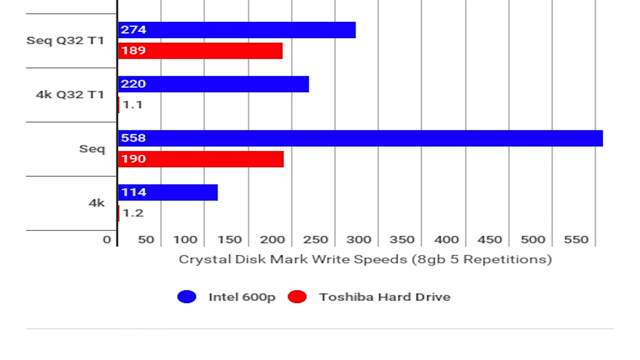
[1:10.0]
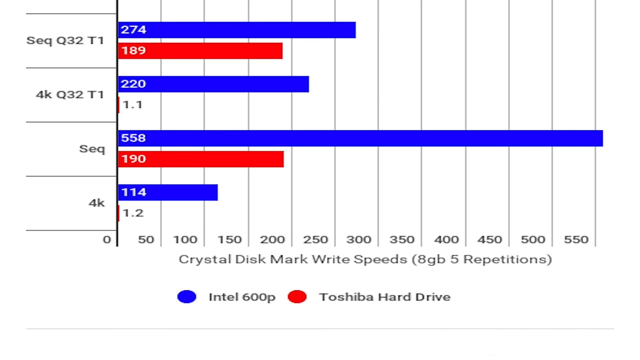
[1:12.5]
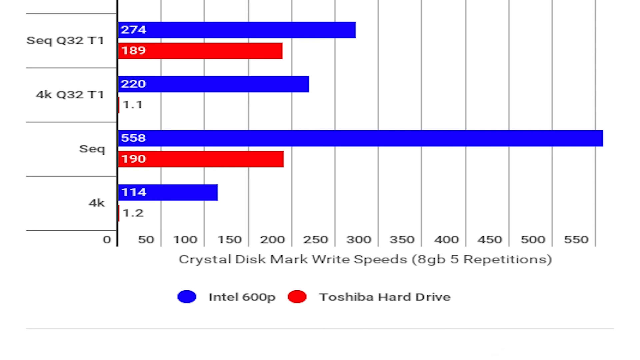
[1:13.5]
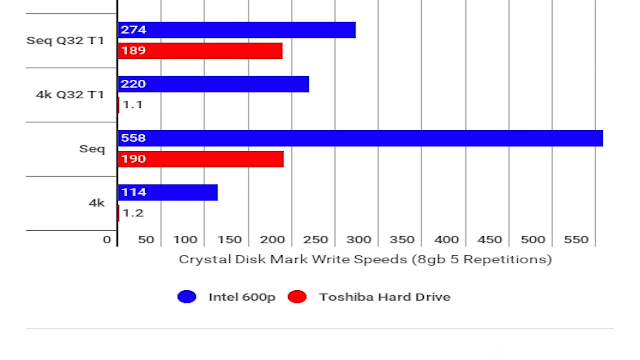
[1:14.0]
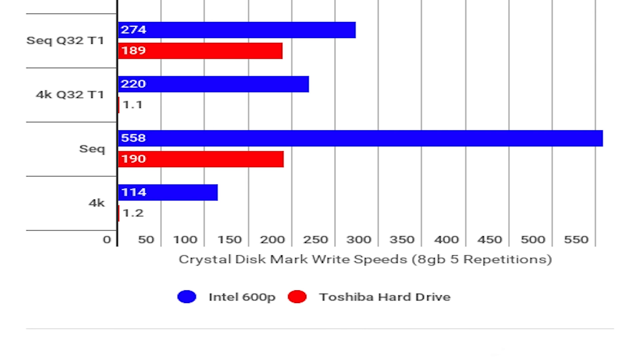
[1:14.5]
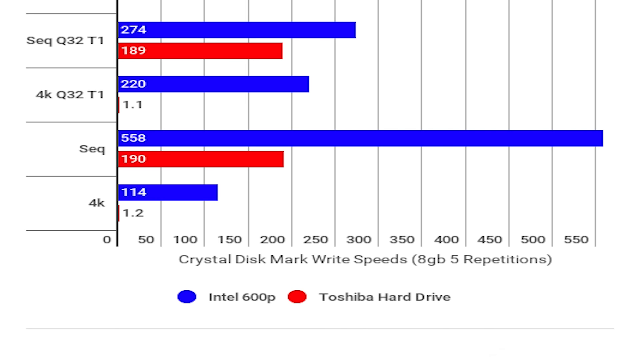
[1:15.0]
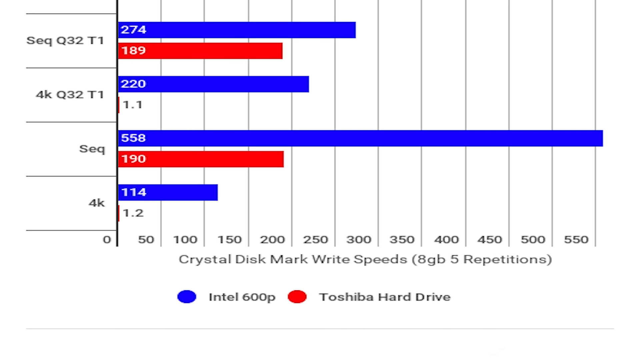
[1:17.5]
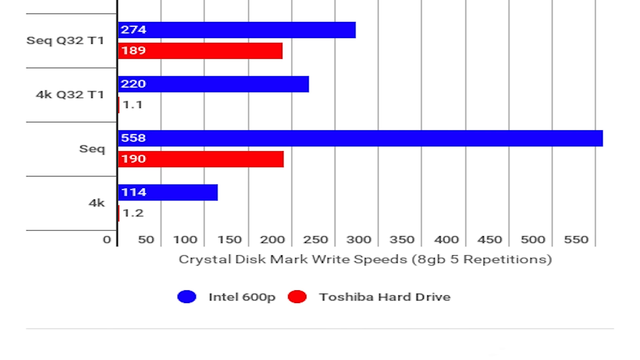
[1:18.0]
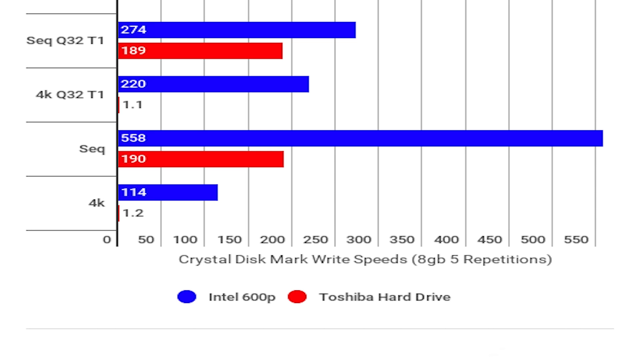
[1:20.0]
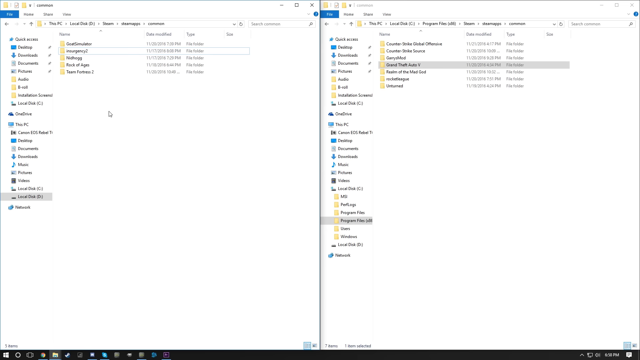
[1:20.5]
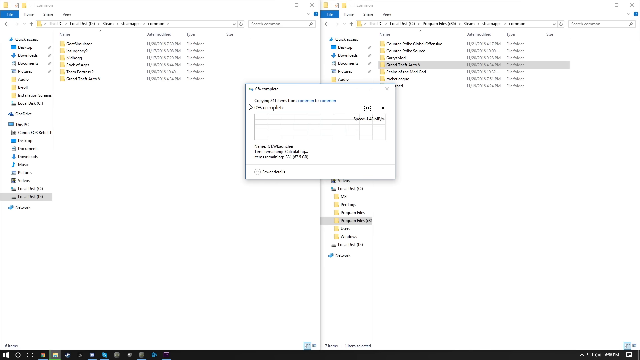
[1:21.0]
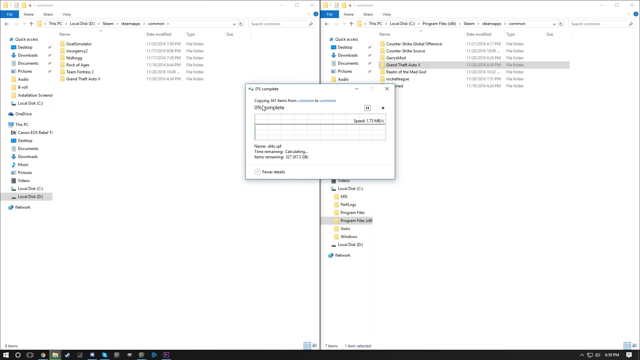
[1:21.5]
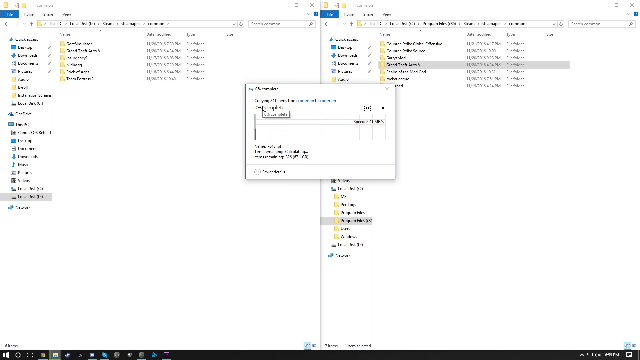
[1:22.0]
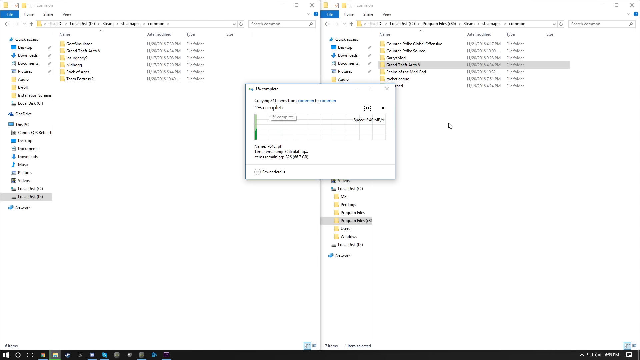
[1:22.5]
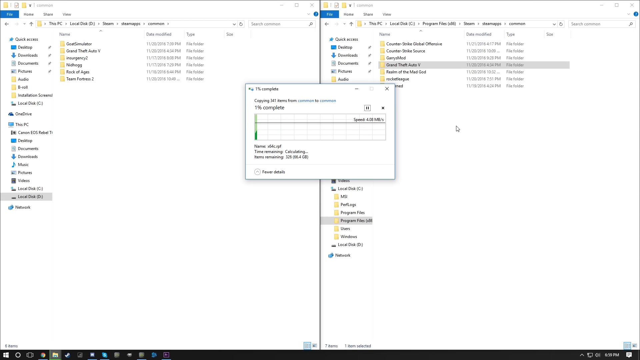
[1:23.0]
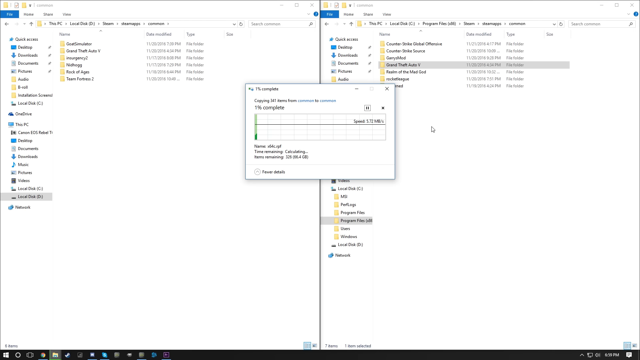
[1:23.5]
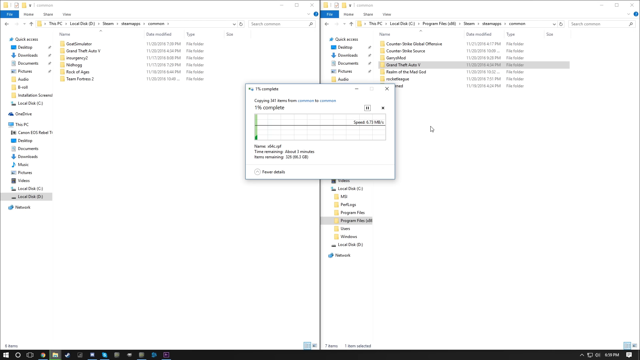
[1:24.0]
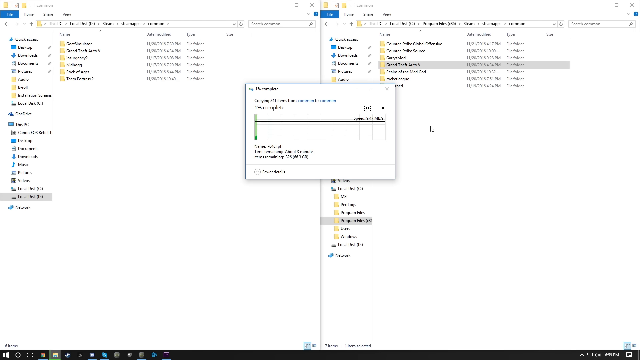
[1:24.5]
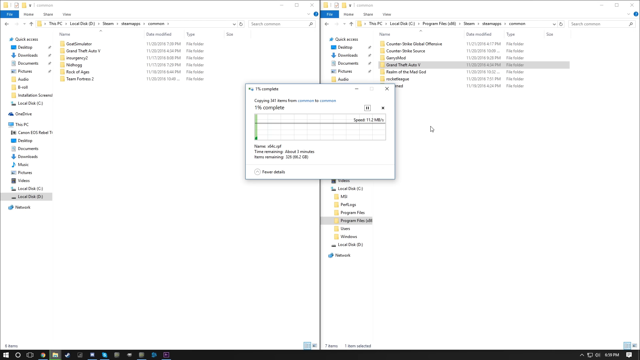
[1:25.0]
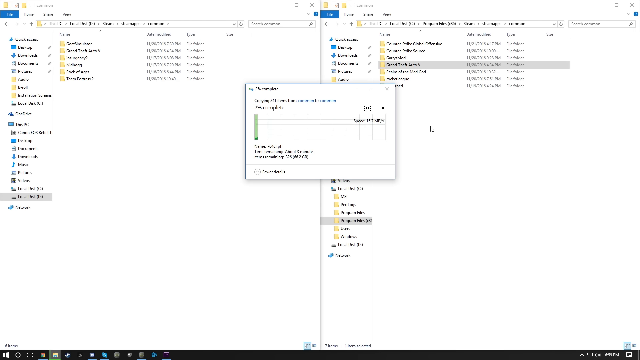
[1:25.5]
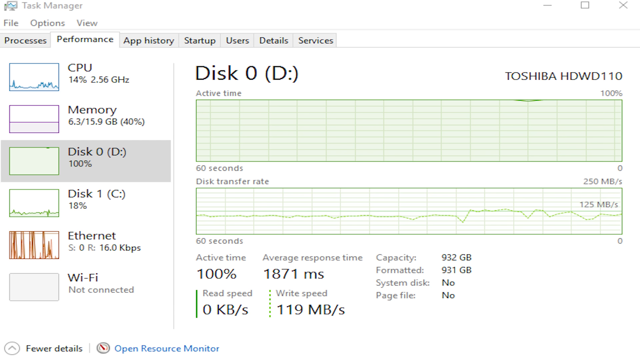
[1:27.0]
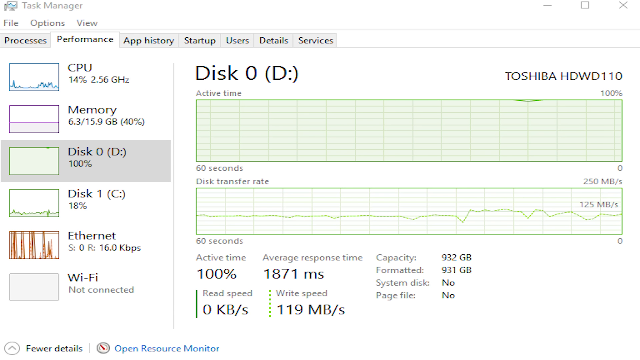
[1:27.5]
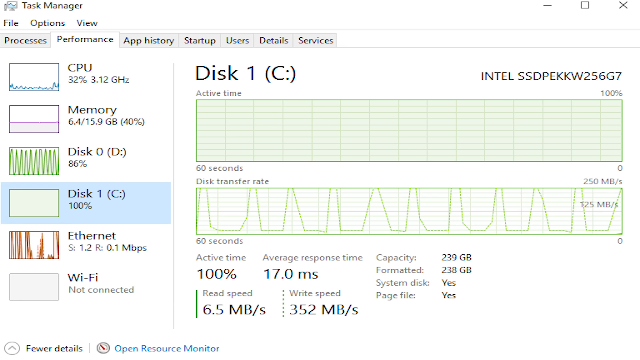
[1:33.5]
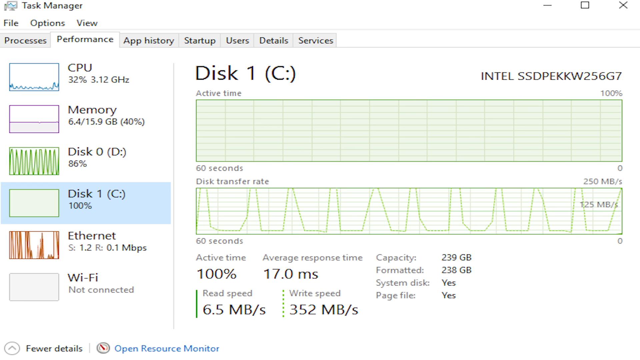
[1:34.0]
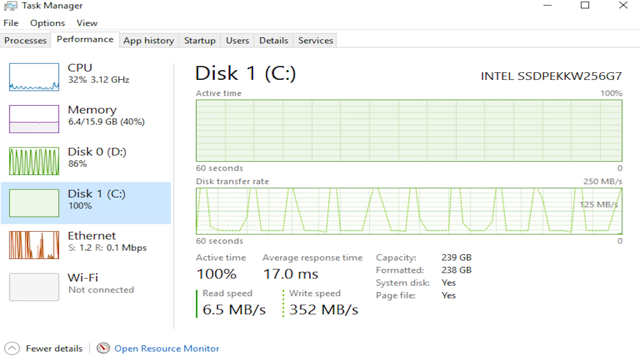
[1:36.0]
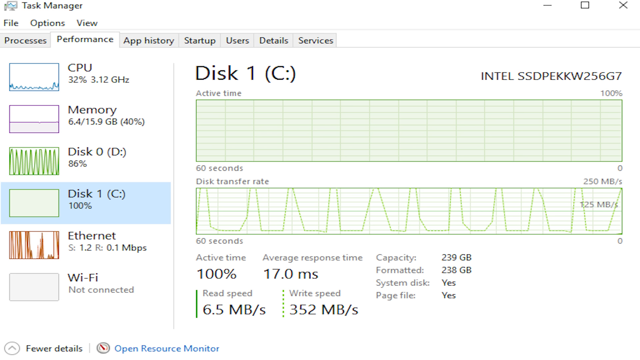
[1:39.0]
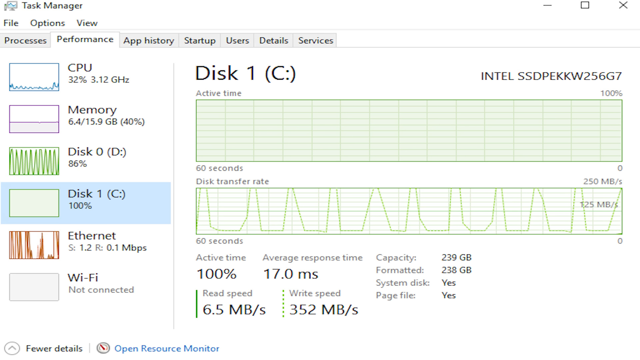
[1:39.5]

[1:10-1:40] A bar graph with blue and red bars lists four items on the left side, and at the bottom it says "crystal disk mark write speeds." A blue dot is labeled "Intel 600p" and a red dot "Toshiba hard drive." The bars have numbers written on them in white; a couple of bars are so tiny that their numbers appear next to them in black, but most are fairly long, and one blue bar crosses all the way to the other side of the screen. Next is a computer screen with possibly two windows open, showing lots of folders and files, and another small window opens in the middle; it appears to be some kind of loading screen, with a green bar on the left side. Then the task manager appears, with "disk 0" at the top, a graph labeled "active time," another labeled "disk transfer rates," and more information about the disk underneath. It switches to the performance tab, showing "disk 1" at the top, with options on the left side of the screen for CPU, memory, disk 0, disk 1, Ethernet and Wi-Fi.